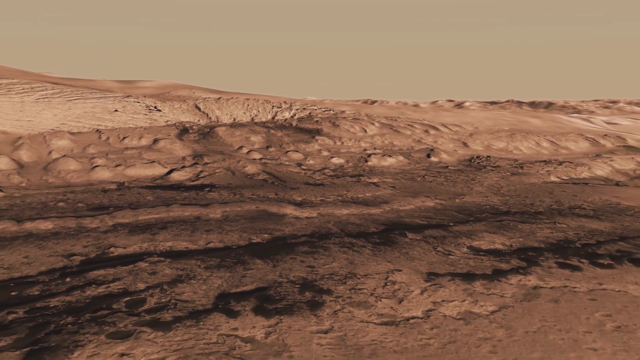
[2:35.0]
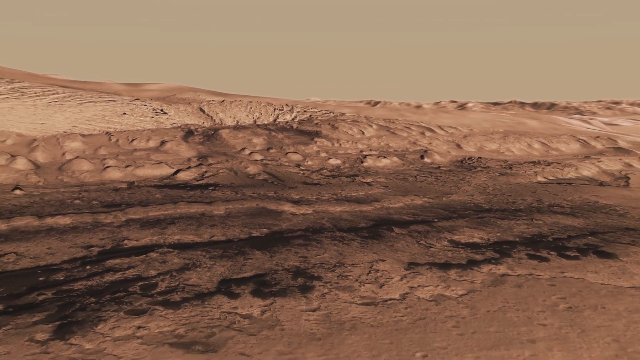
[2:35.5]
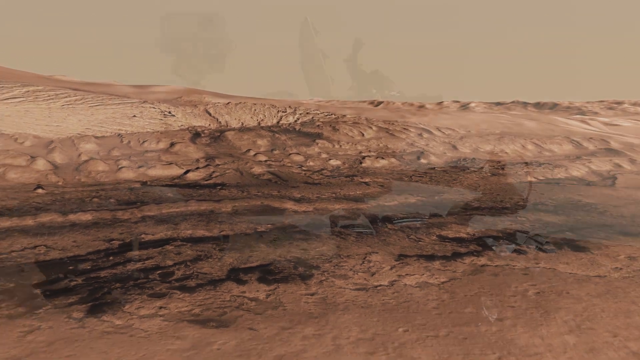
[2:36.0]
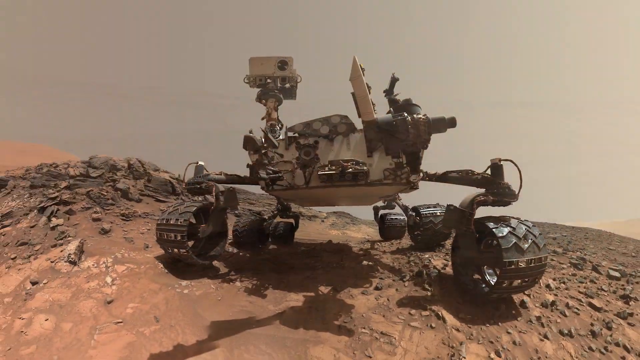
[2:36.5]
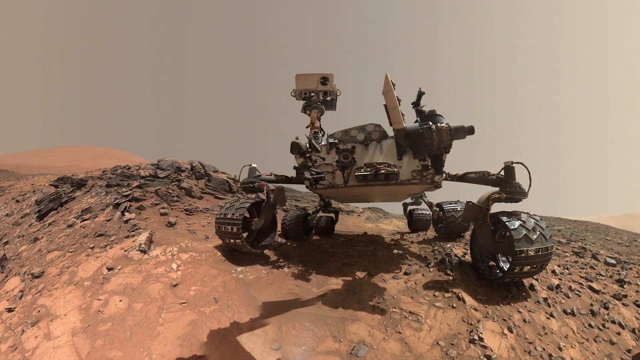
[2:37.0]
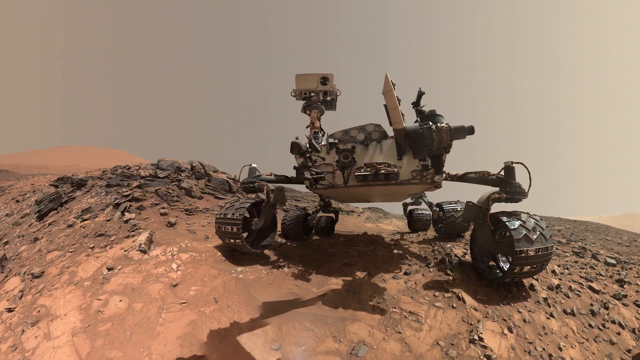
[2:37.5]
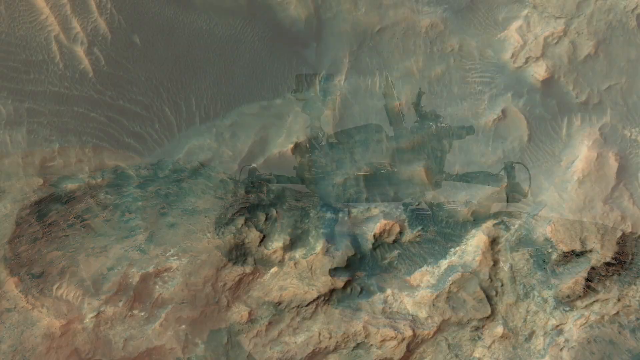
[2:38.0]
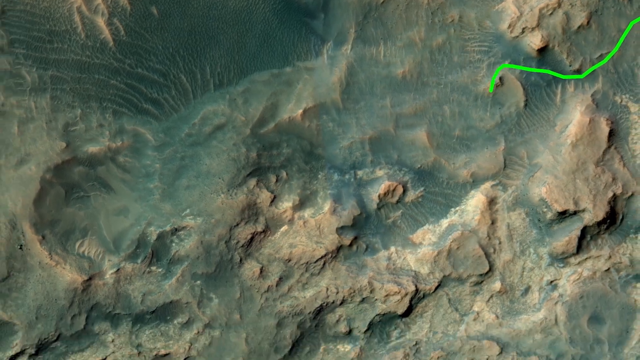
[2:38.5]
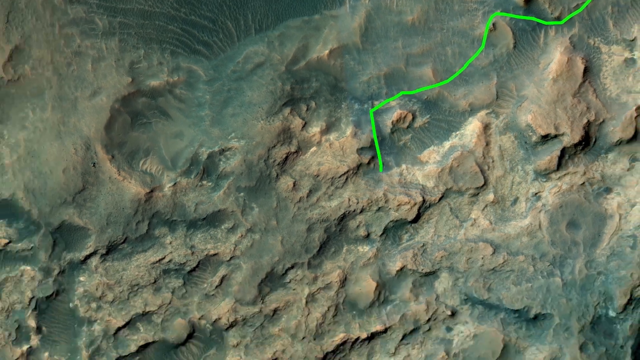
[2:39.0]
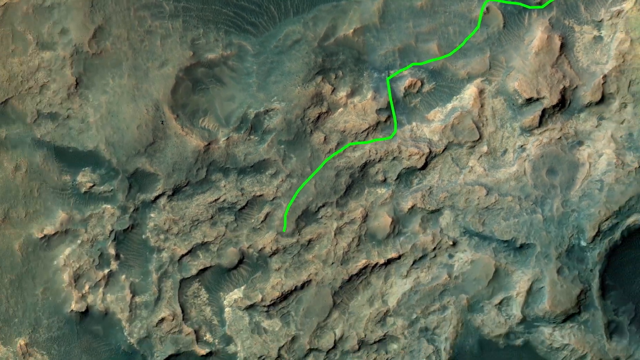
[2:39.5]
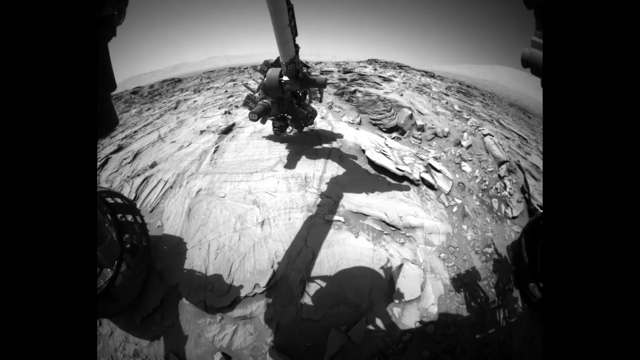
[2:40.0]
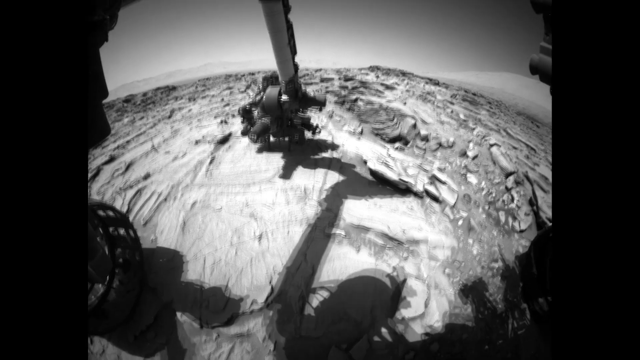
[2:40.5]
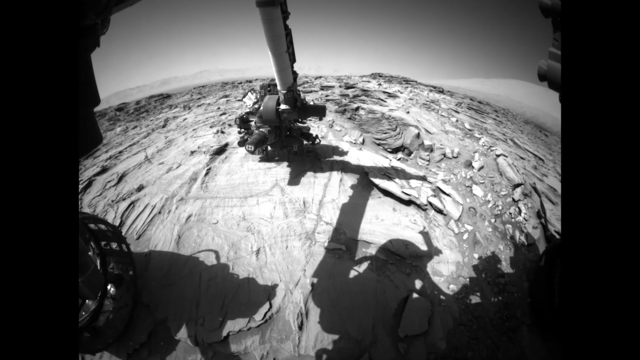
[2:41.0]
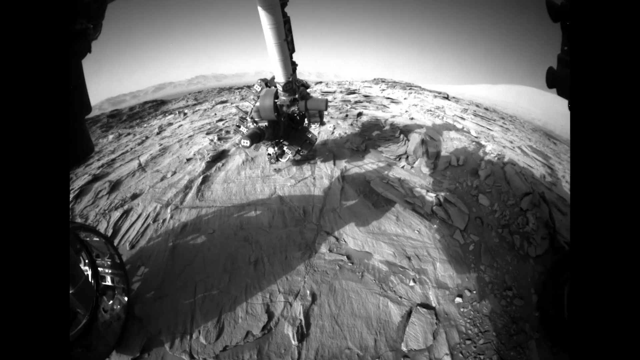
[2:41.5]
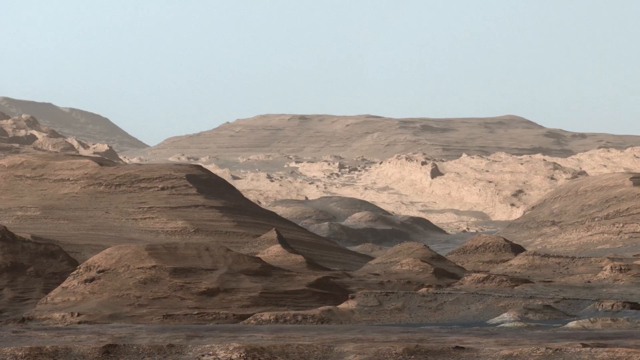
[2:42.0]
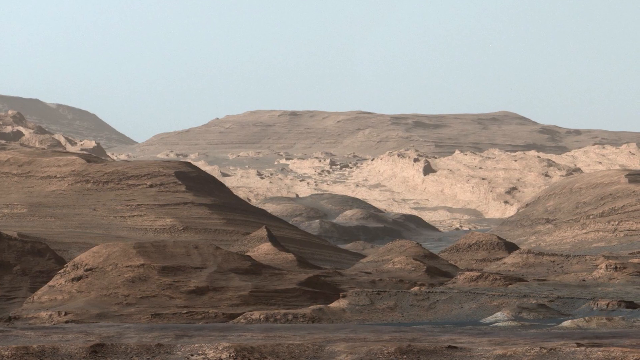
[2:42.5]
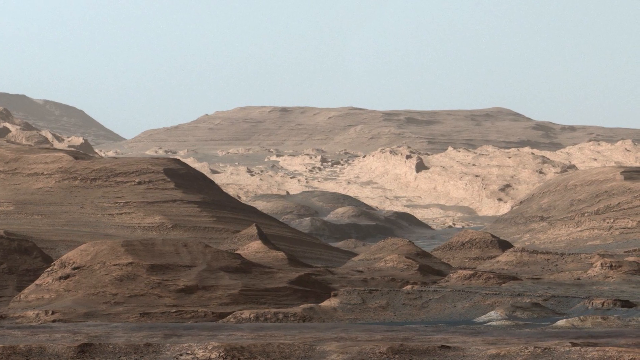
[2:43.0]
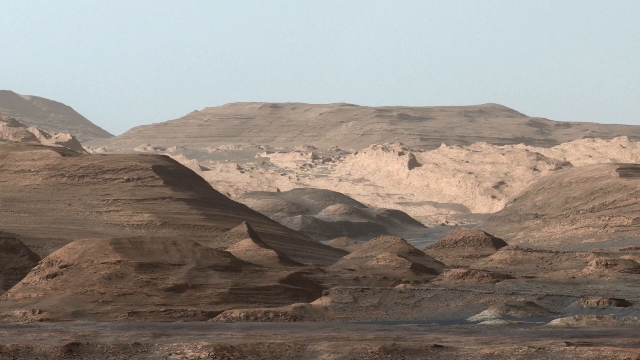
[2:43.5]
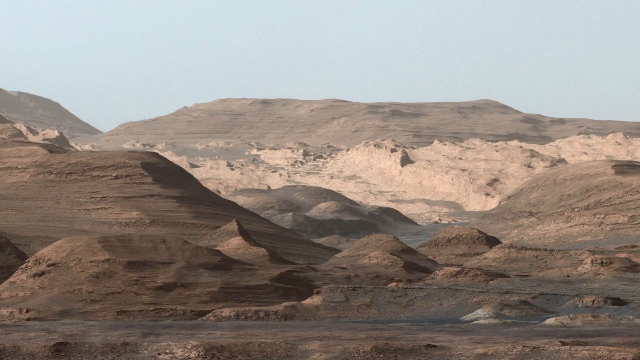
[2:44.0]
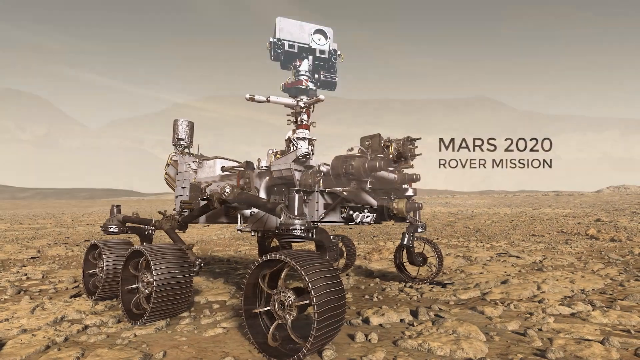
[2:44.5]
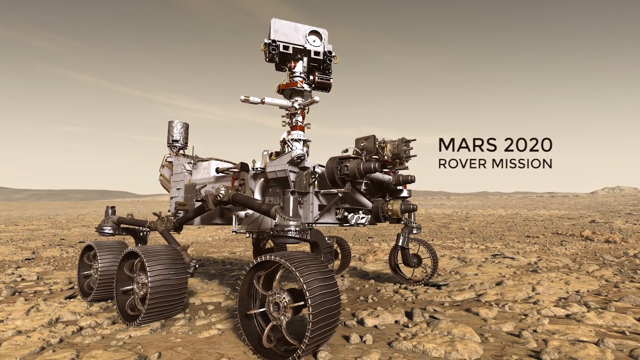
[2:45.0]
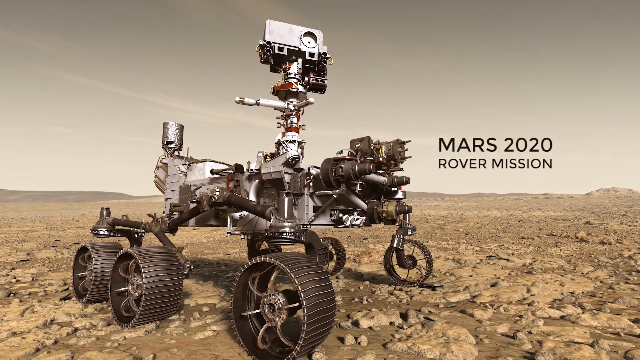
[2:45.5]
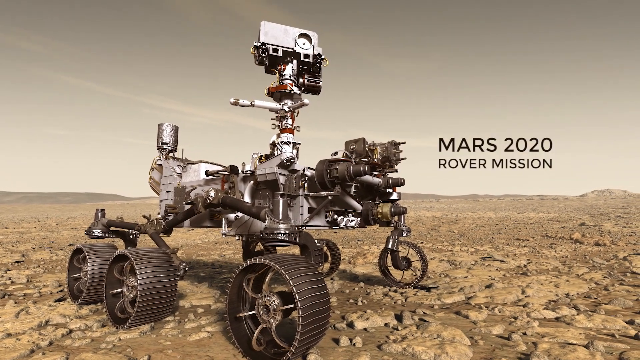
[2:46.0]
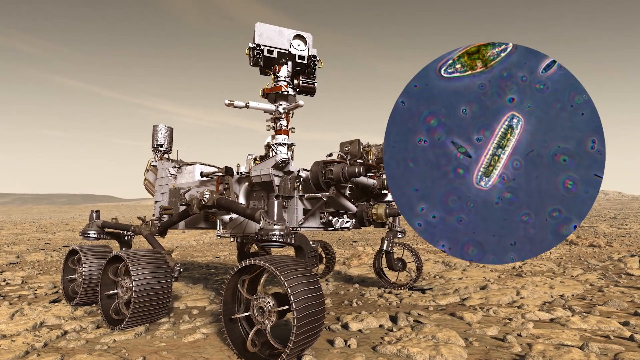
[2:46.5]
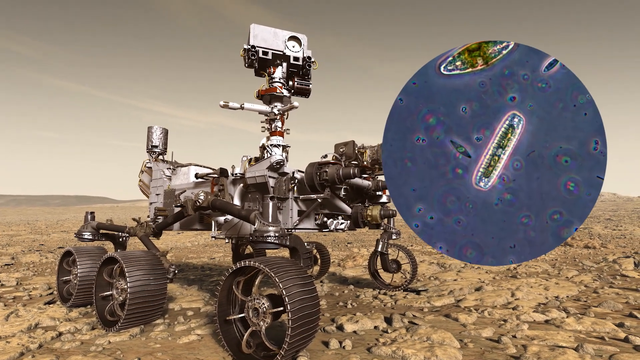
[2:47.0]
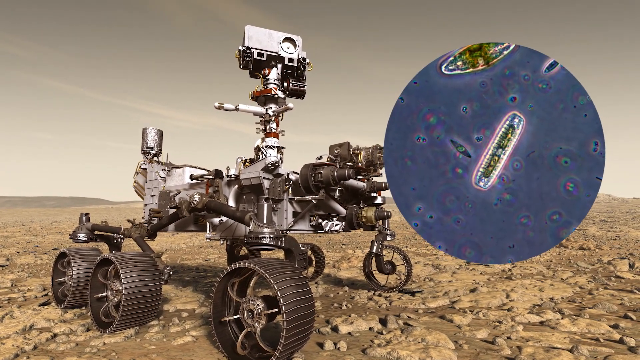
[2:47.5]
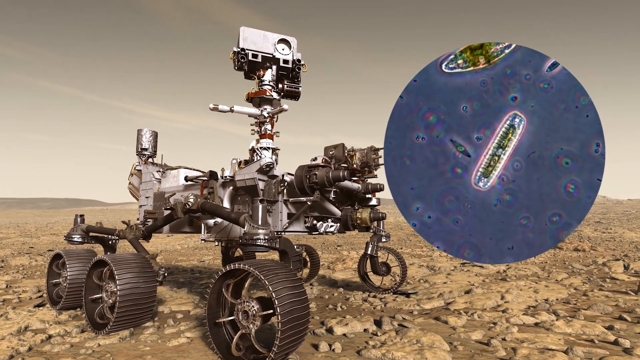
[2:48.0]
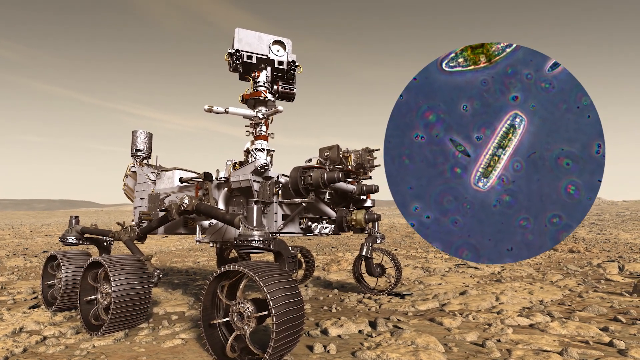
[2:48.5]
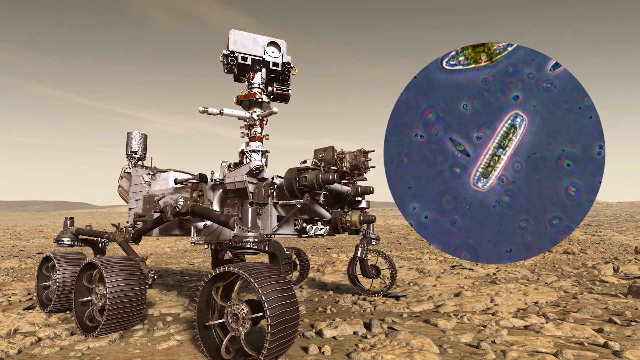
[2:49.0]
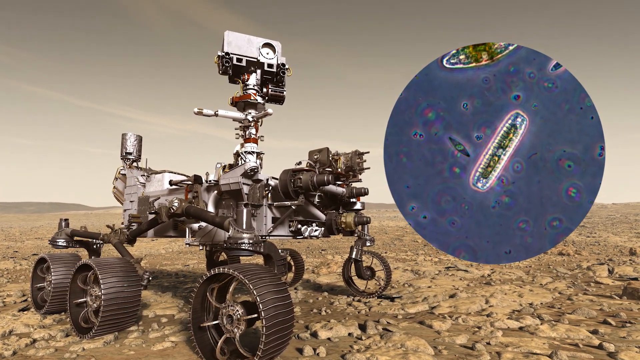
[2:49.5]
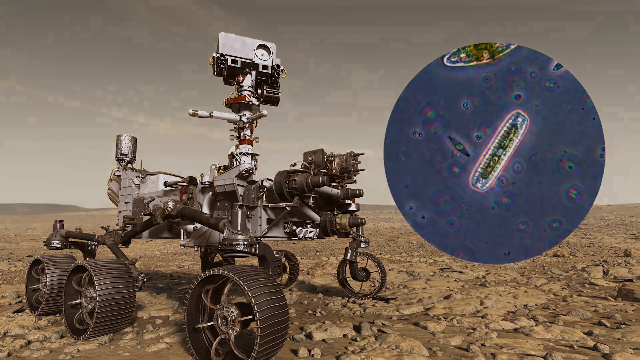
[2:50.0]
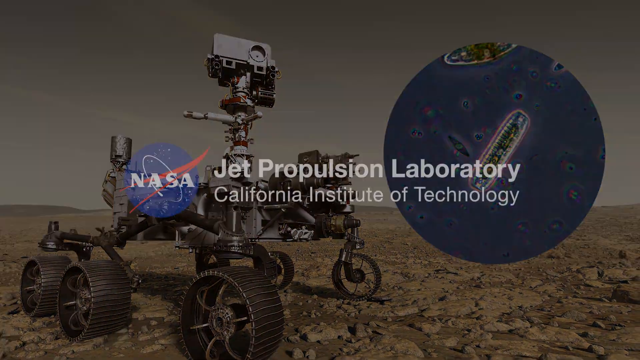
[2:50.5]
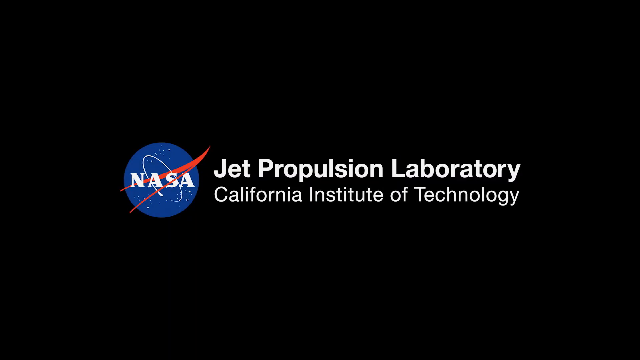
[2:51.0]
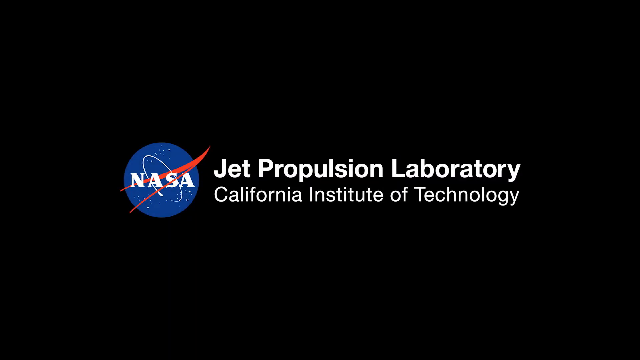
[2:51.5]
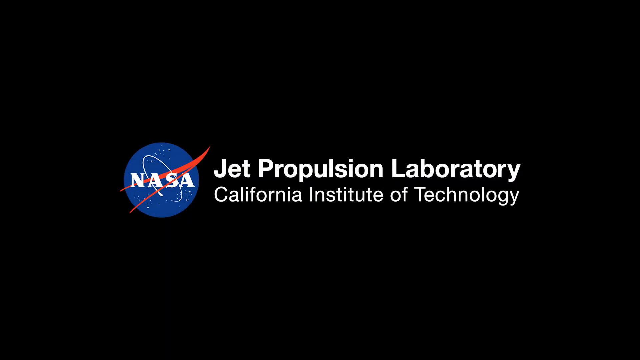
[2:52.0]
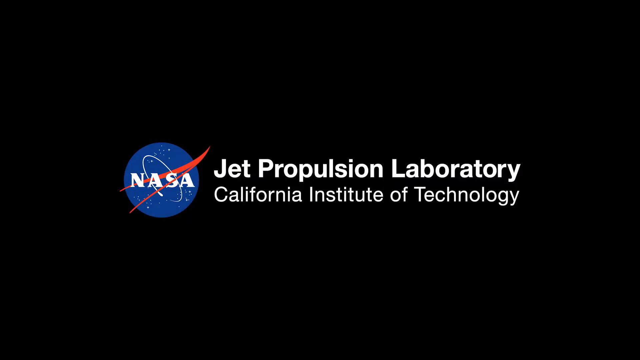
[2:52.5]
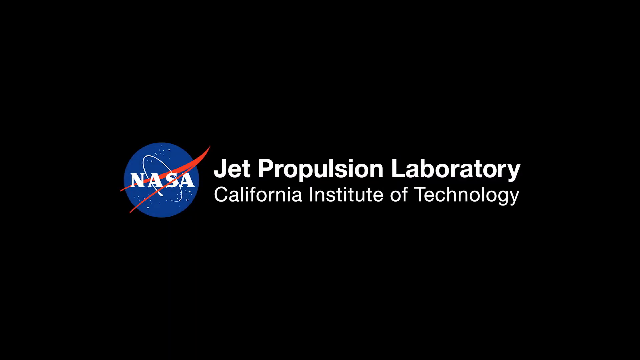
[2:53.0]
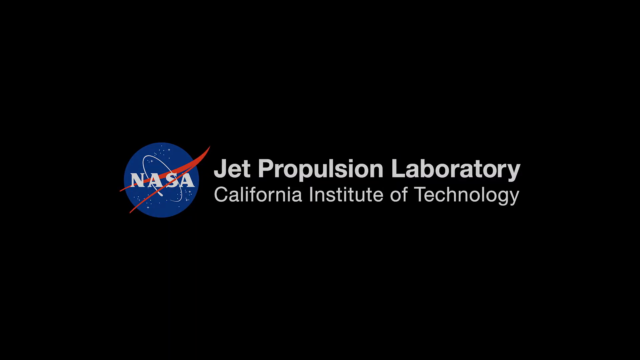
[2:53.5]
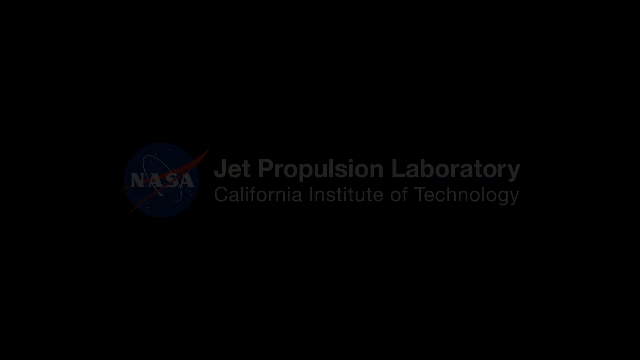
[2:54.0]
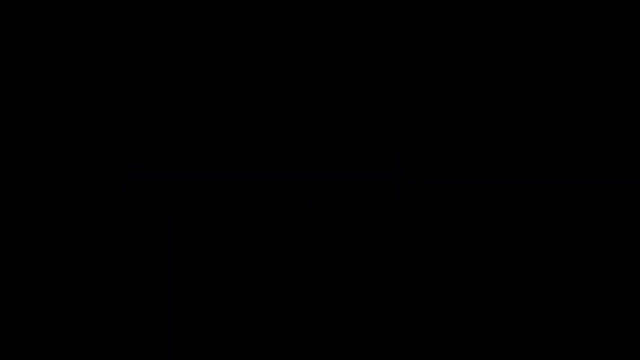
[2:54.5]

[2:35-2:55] A 3D representation of the planet's surface zooms out slowly. A photograph shows the Mars rover robot perched on top of what appears to be a small, rocky and sandy hill, with possibly the sun in the lower right corner of the background. An aerial view of the planet follows, with a green line snaking its way toward the bottom left of the screen, likely tracing an important path. A short black-and-white video of the rover plays, likely from the rover's perspective, showing sloping, sphere-like terrain. More shots taken by the rover show light brown, sandy, mountainous or hill-like terrain, with a bluer sky in the background. Black text on the right side of the screen identifies the Mars 2020 rover mission. Then what appears to be a microscope image shows a green and blue, rod-like cell against a blue background. The video finishes by showing that it was produced by NASA and the Jet Propulsion Laboratory at the California Institute of Technology.